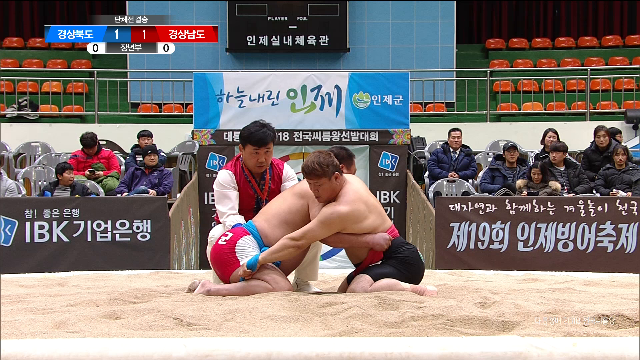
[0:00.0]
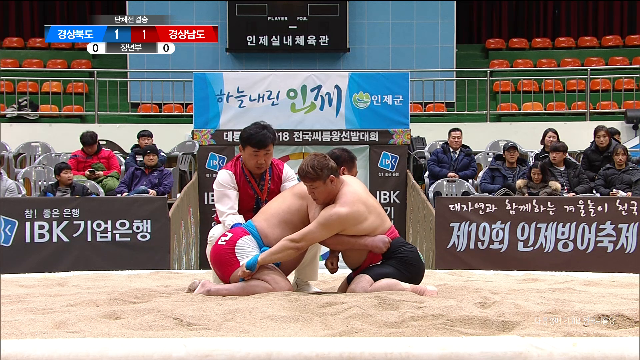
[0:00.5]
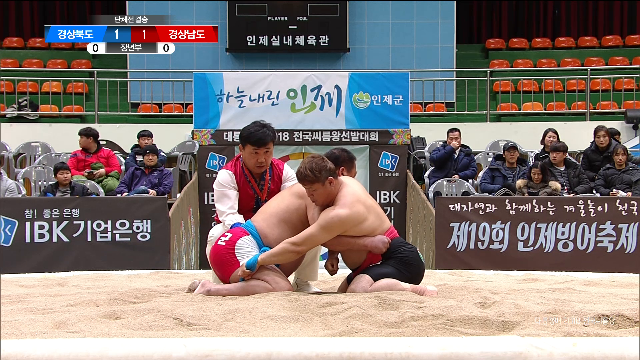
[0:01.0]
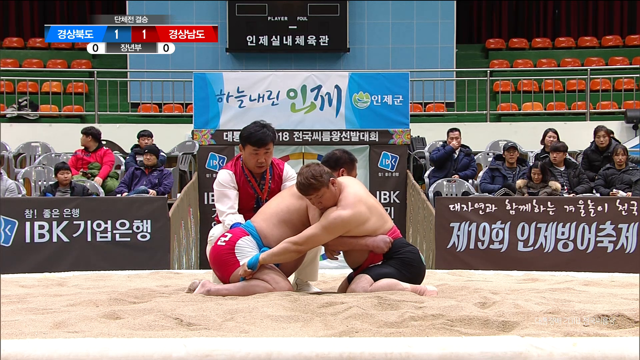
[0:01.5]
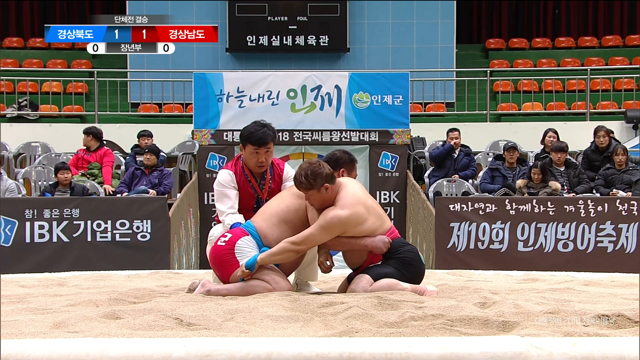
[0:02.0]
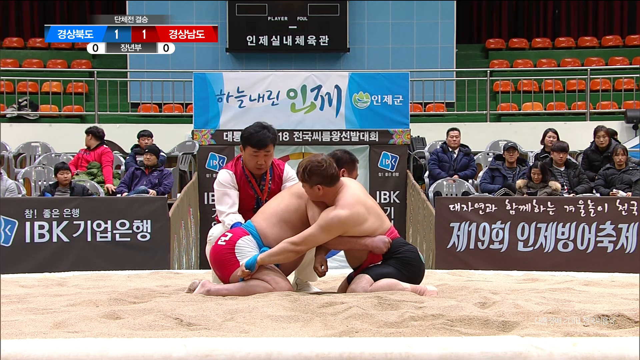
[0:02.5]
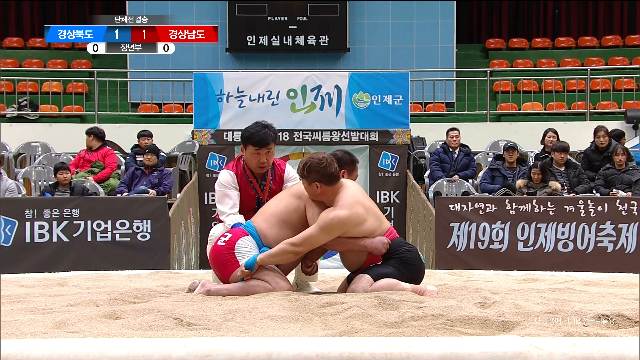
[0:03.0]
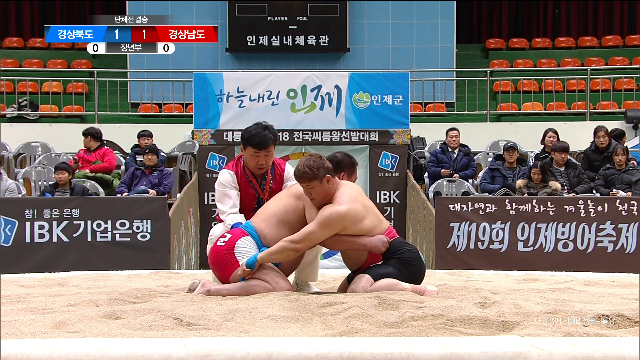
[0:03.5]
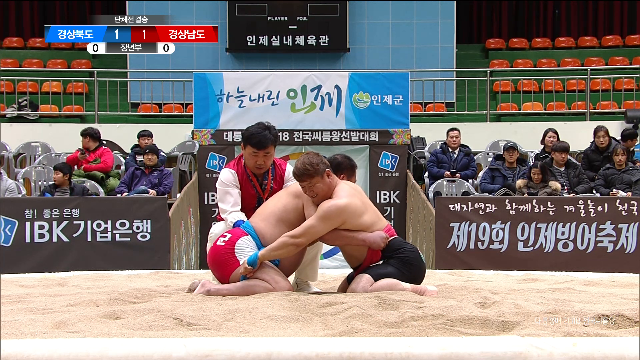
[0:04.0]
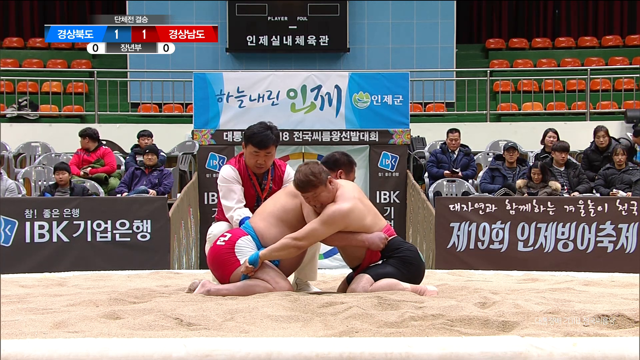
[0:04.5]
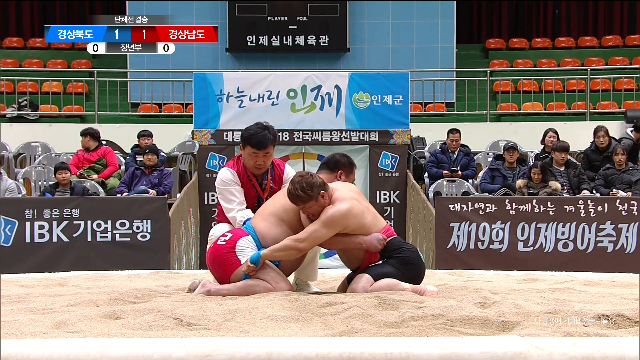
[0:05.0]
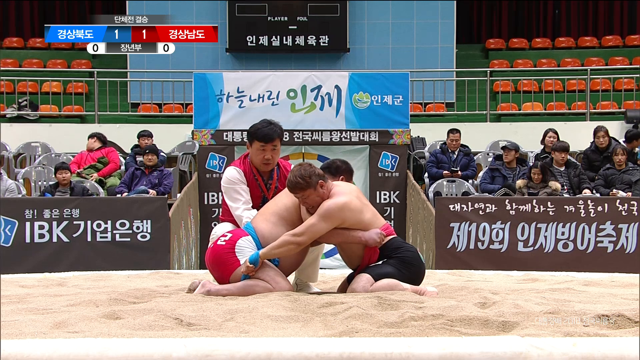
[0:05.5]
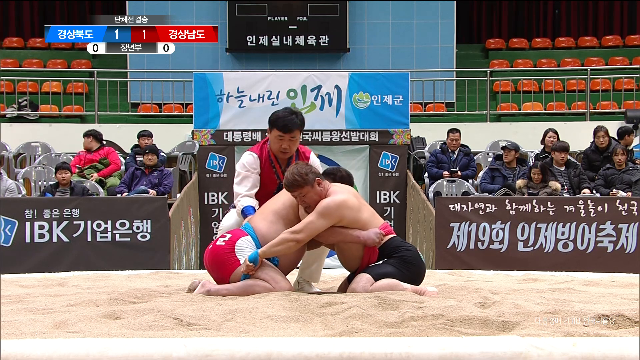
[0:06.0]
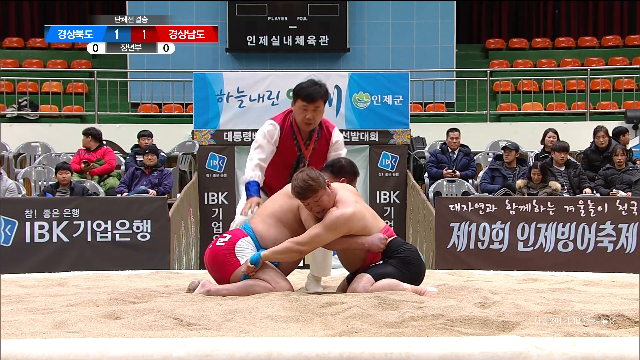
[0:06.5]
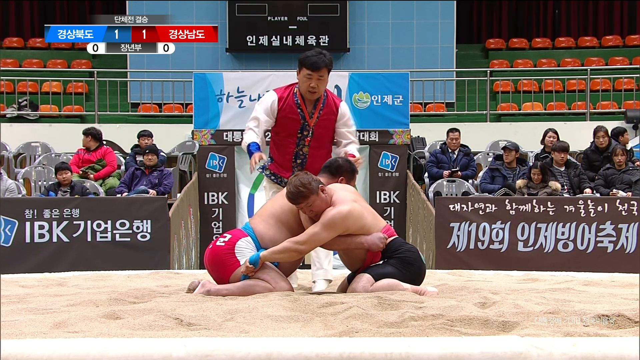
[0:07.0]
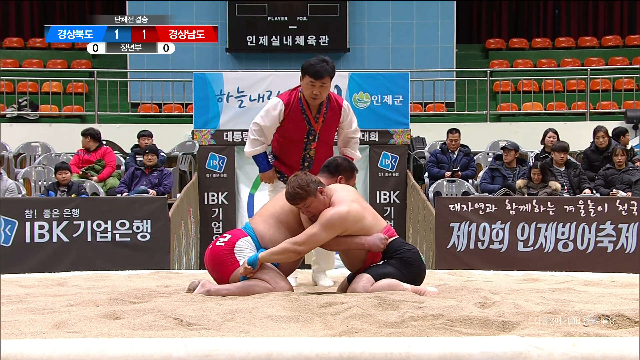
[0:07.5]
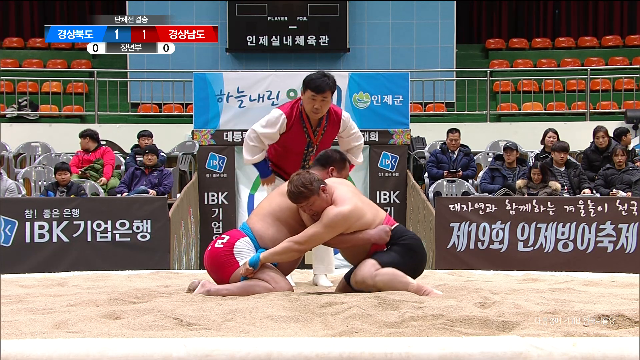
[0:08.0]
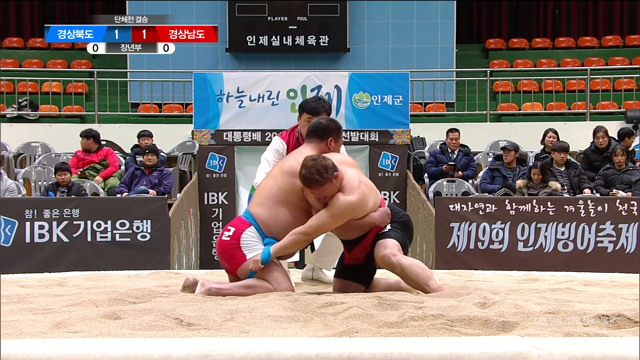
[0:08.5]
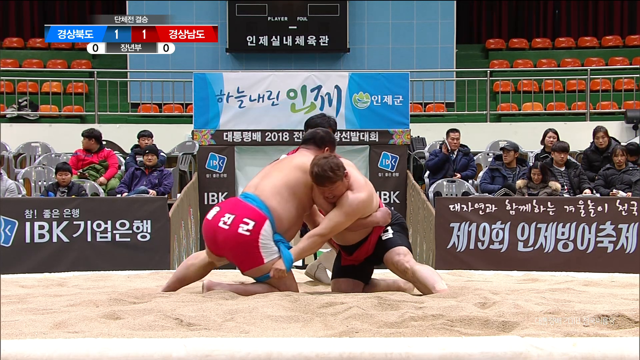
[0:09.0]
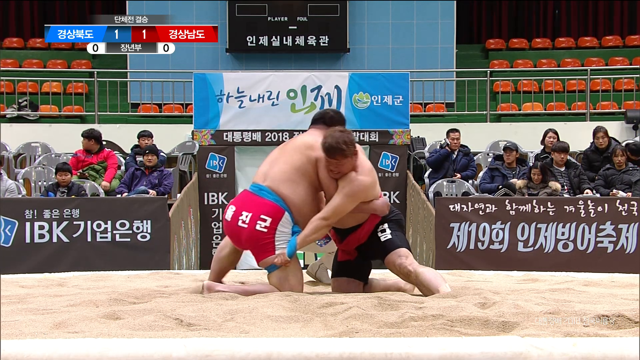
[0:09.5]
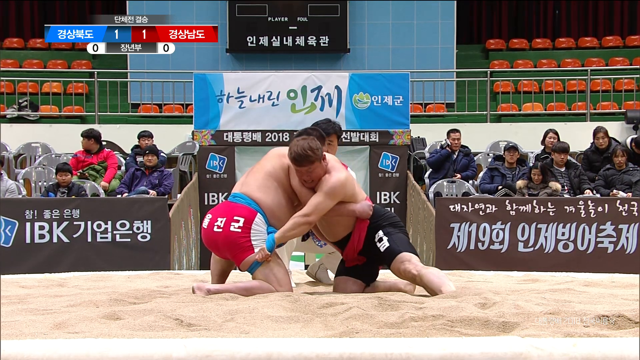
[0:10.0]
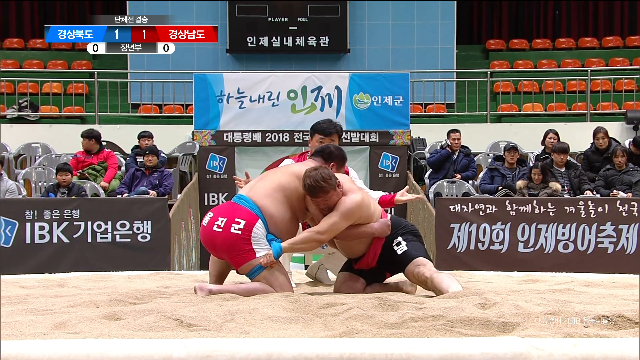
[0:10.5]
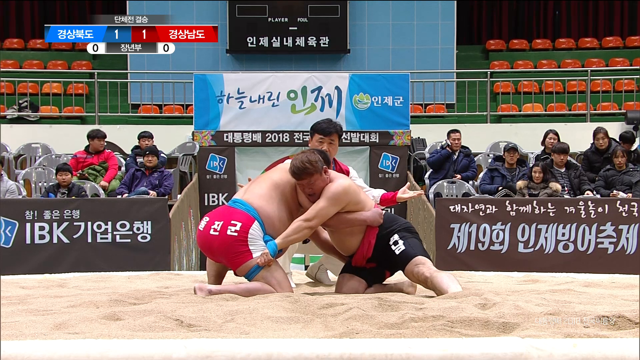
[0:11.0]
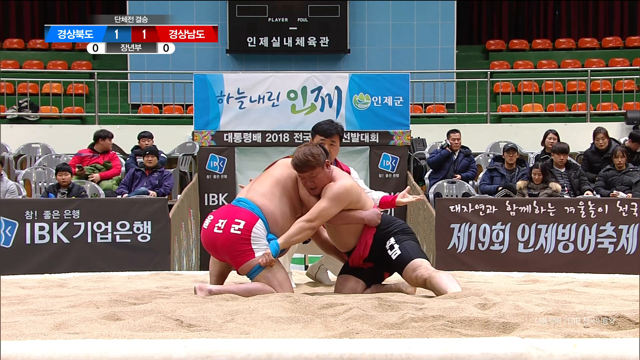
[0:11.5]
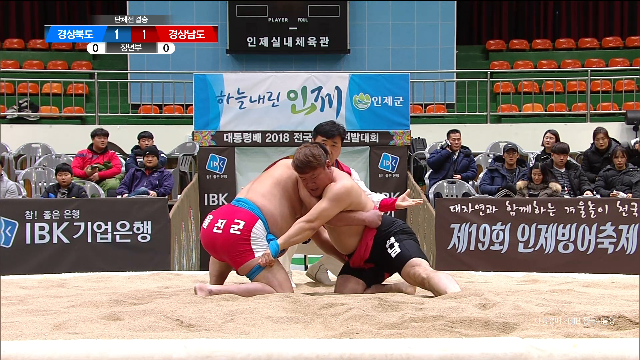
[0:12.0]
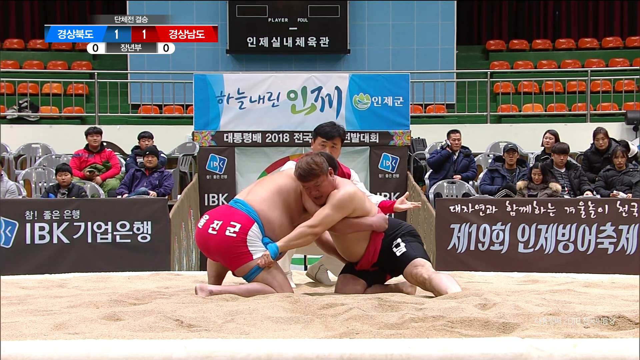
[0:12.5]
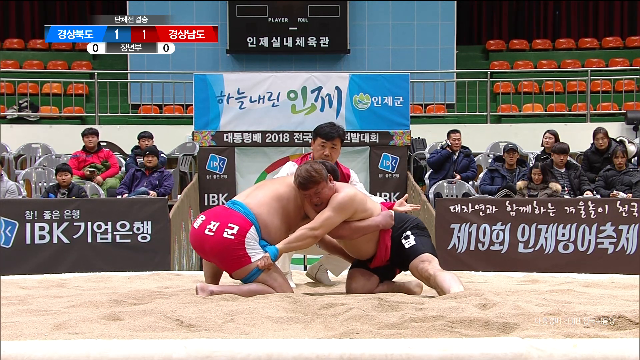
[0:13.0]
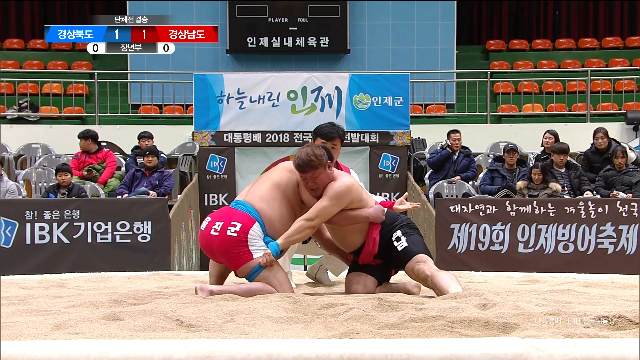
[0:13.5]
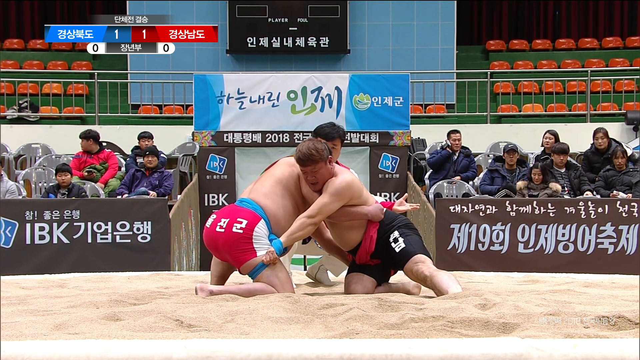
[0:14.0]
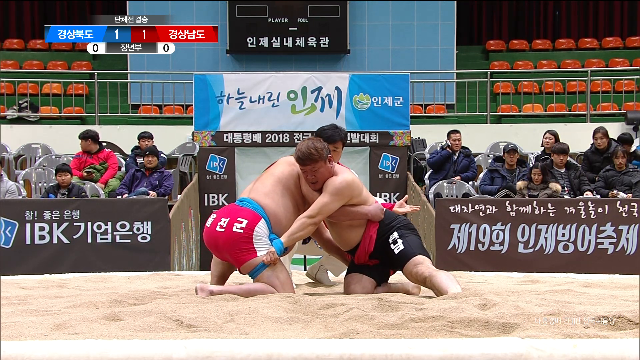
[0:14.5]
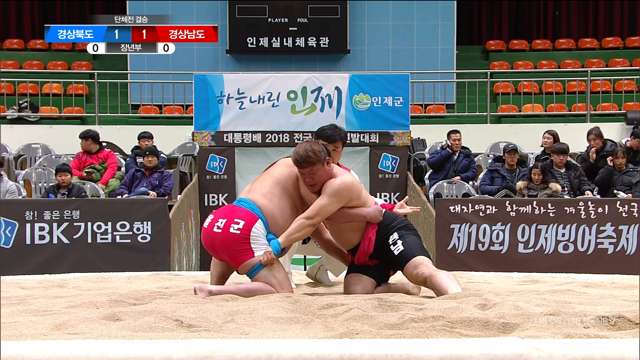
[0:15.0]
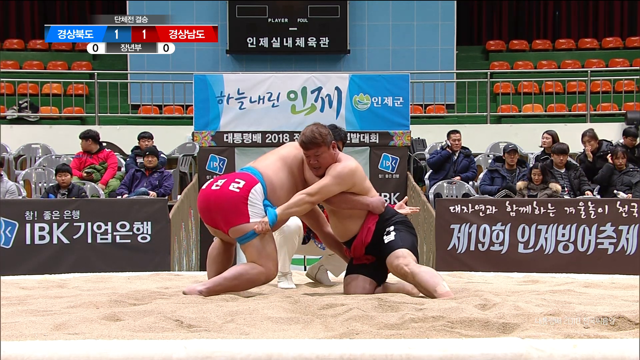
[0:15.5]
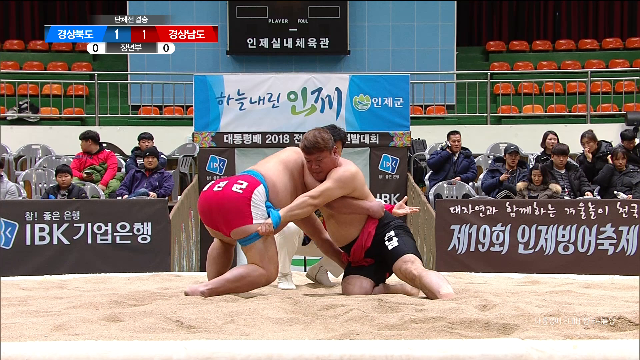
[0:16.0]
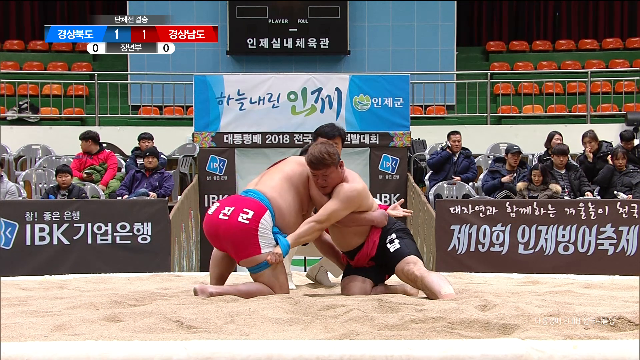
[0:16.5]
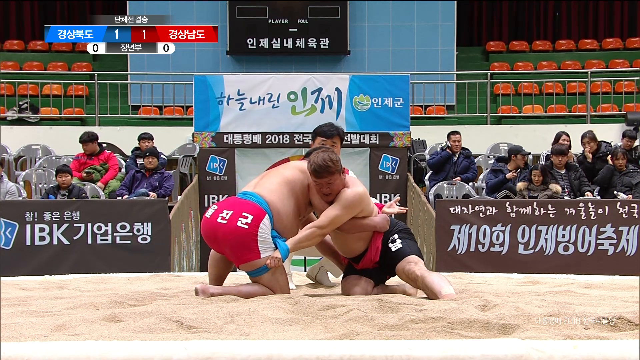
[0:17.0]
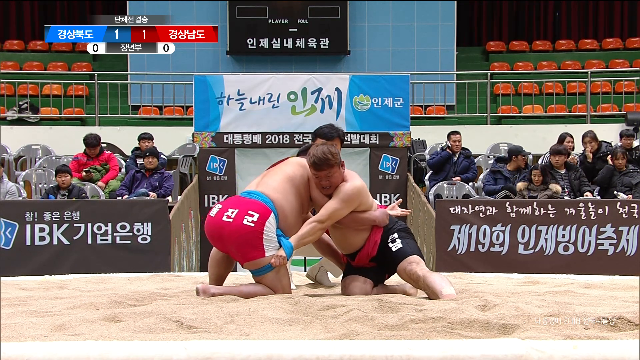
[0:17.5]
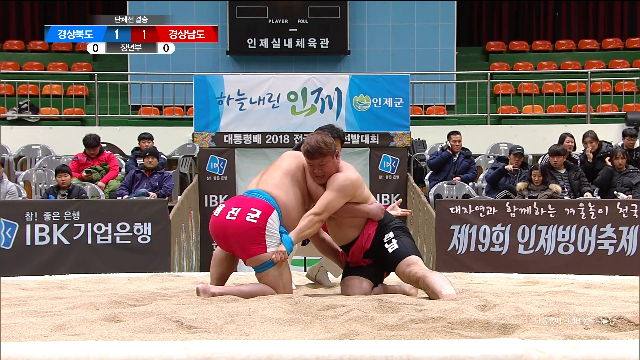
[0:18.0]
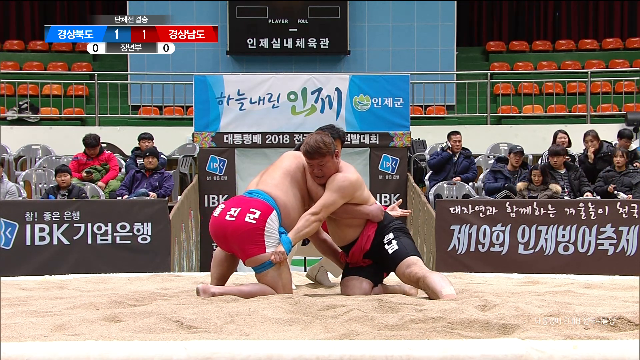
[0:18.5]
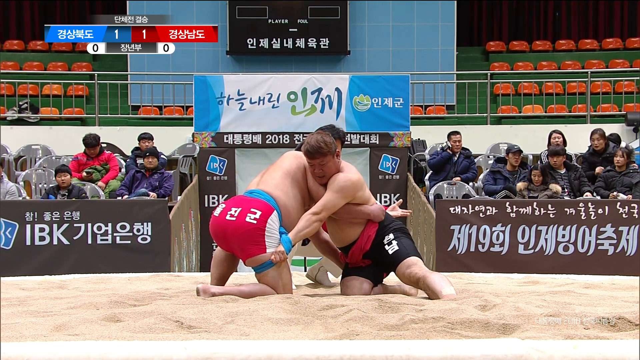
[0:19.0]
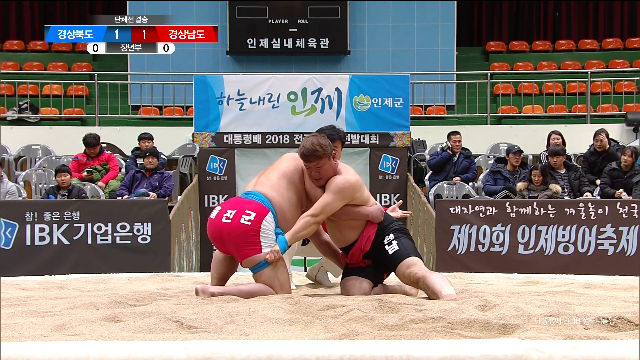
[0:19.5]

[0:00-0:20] This appears to be two men wrestling. All of the text in the background is in another language, except for the letters I-B-U-K. The two men are kneeling in the sand, both wearing shorts, each with a sash tied around his waist. It looks like they are hugging, but they are actually reaching under each other and grabbing the sash of the other wrestler. They start to move, kind of half on their knees and half trying to stand up, and seem to be trying to push and pull each other a certain way. Squatting down behind them is a referee in white shoes, white pants and a red and white jacket. He has dark black hair and holds his left hand out to his side with his open palm facing upward.